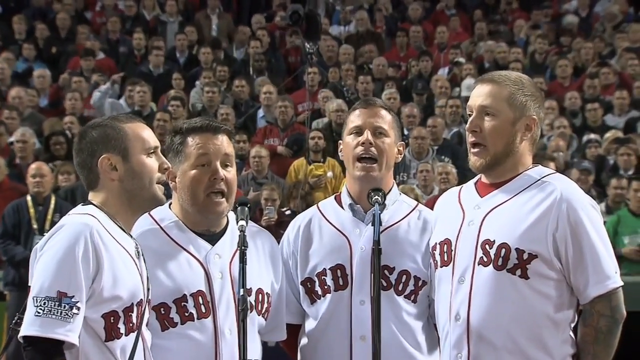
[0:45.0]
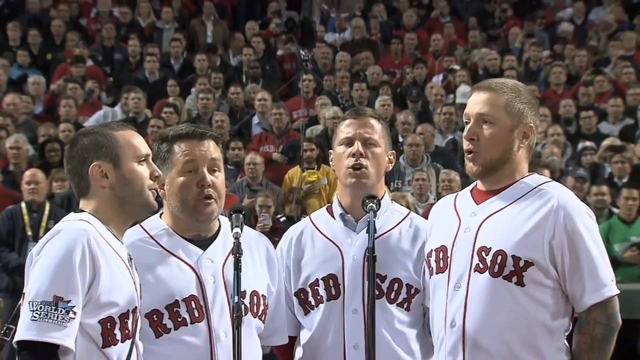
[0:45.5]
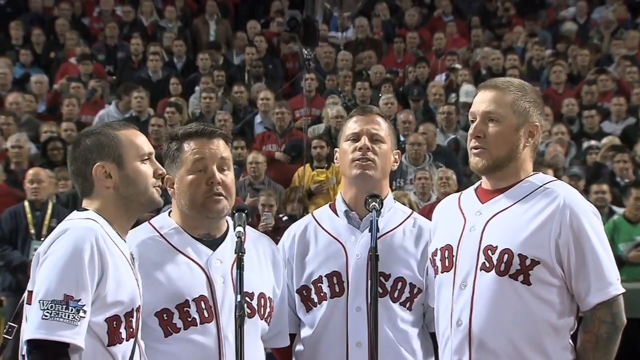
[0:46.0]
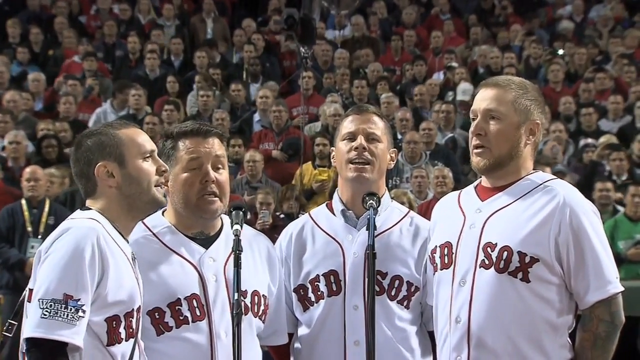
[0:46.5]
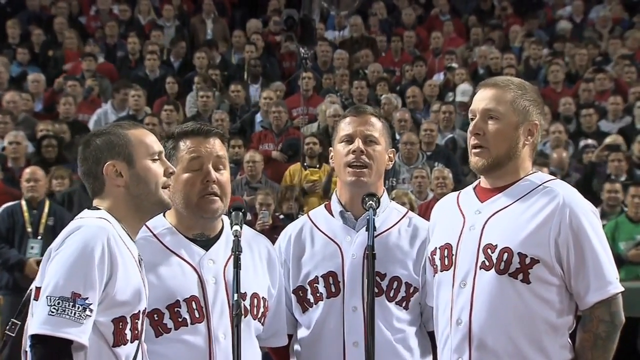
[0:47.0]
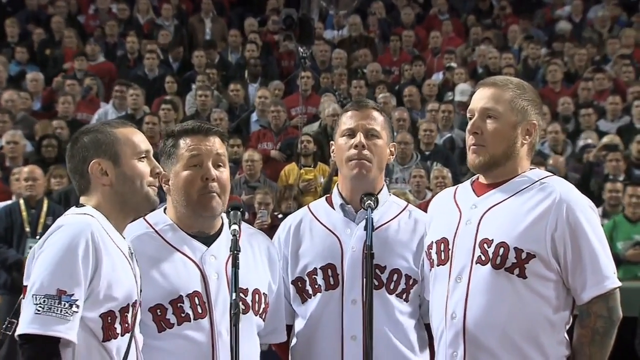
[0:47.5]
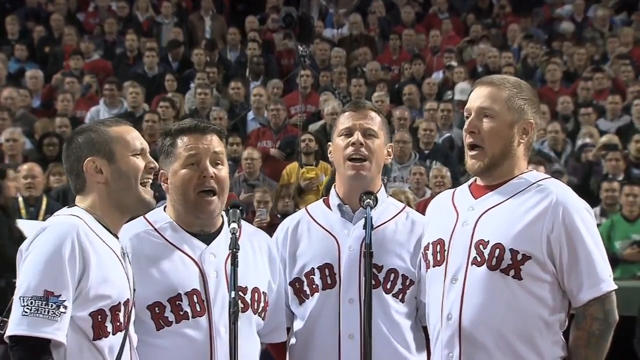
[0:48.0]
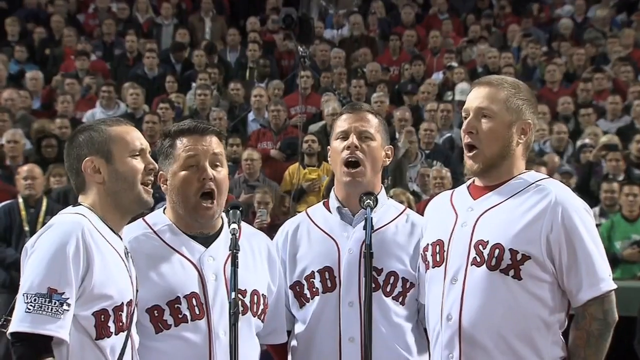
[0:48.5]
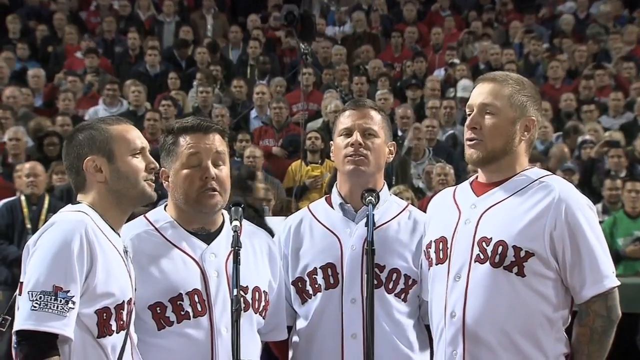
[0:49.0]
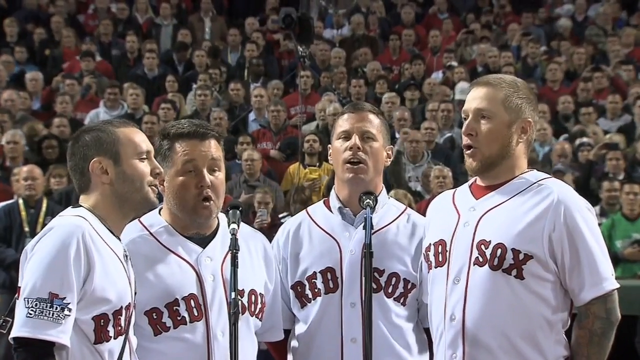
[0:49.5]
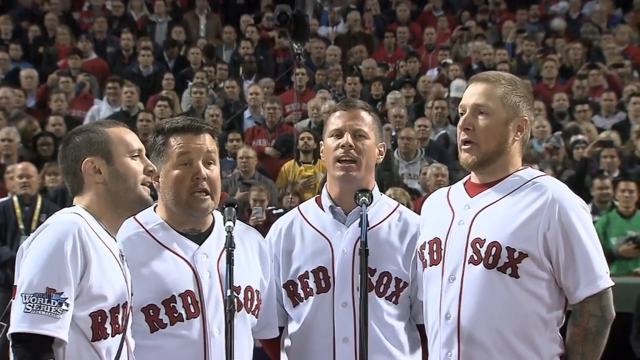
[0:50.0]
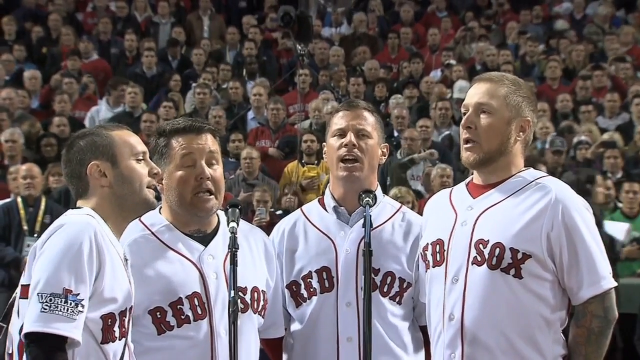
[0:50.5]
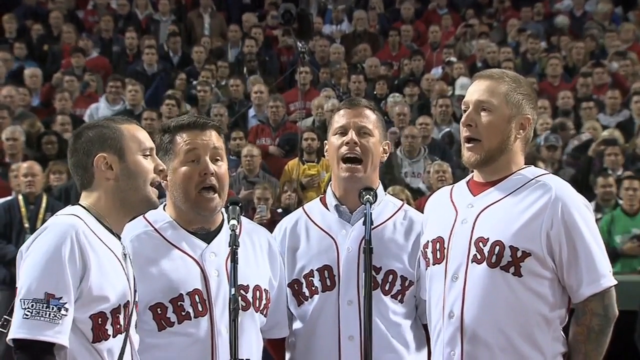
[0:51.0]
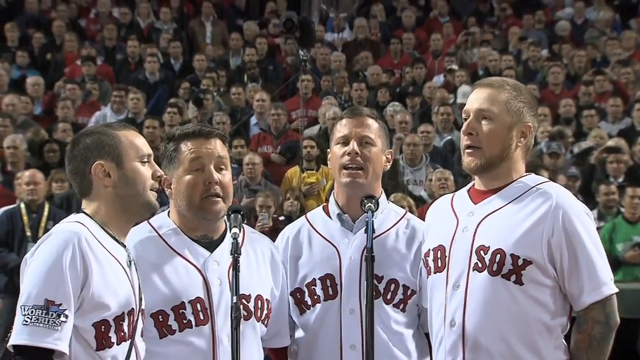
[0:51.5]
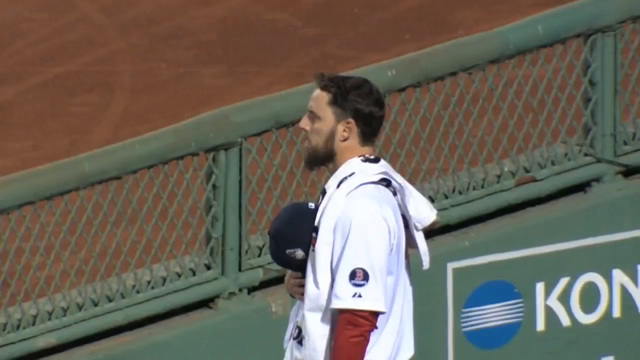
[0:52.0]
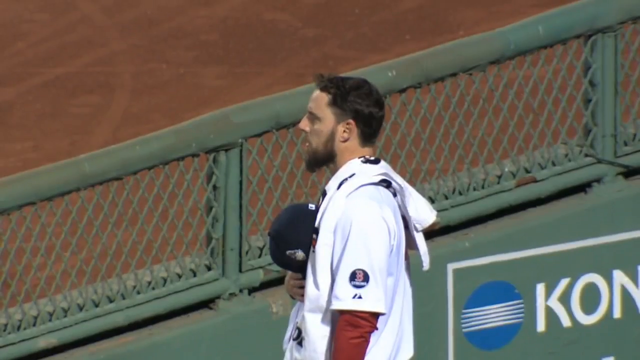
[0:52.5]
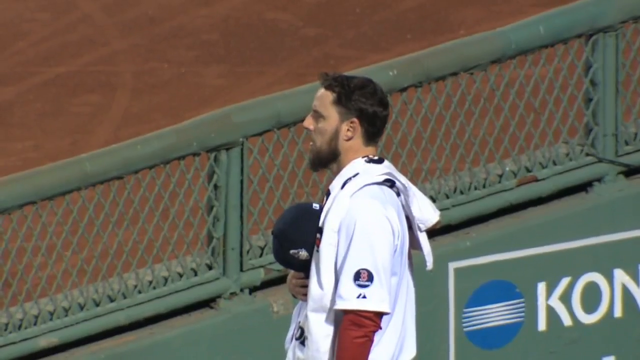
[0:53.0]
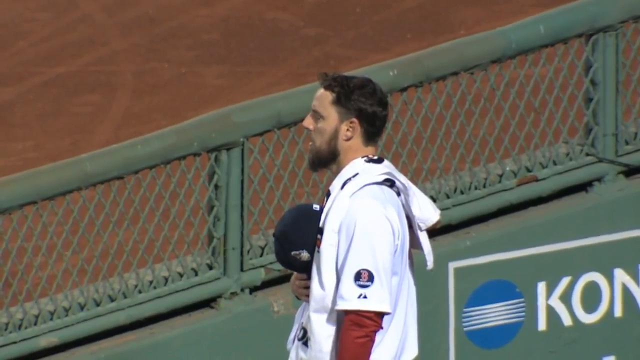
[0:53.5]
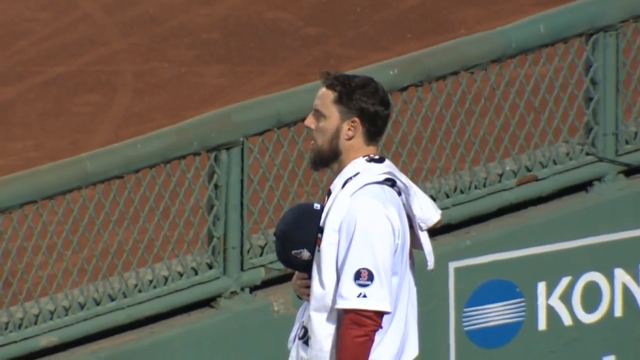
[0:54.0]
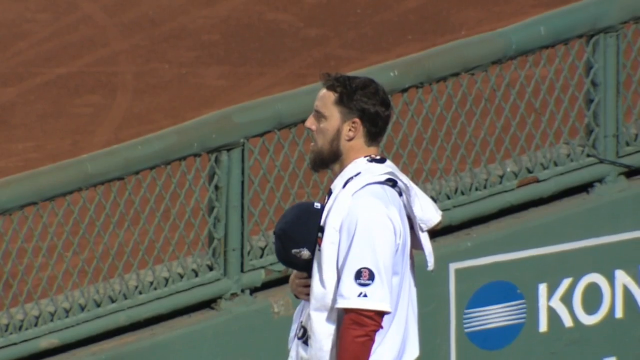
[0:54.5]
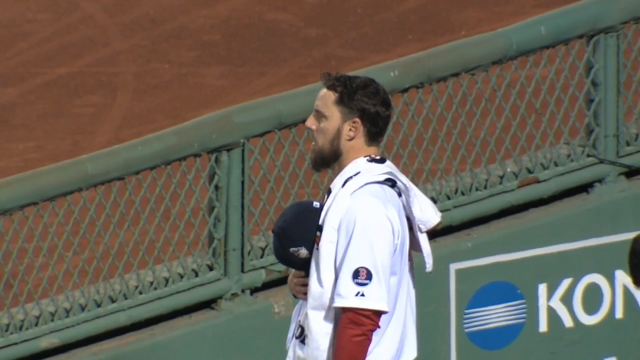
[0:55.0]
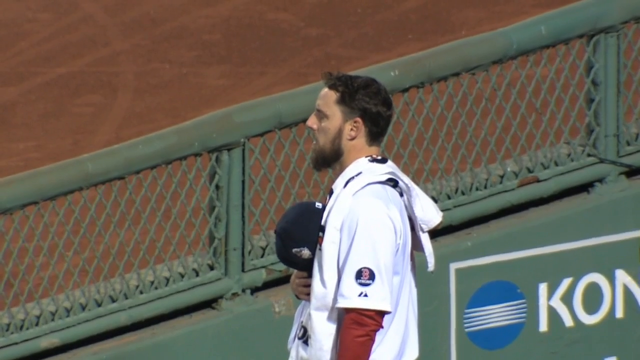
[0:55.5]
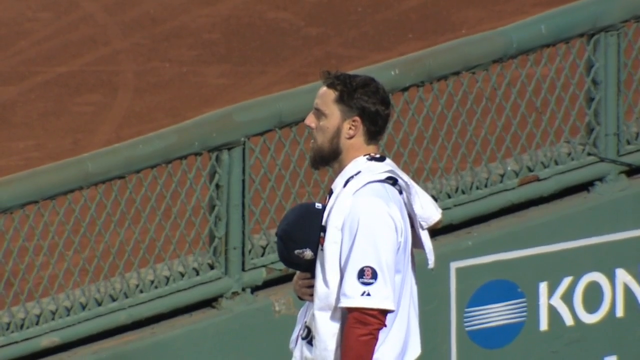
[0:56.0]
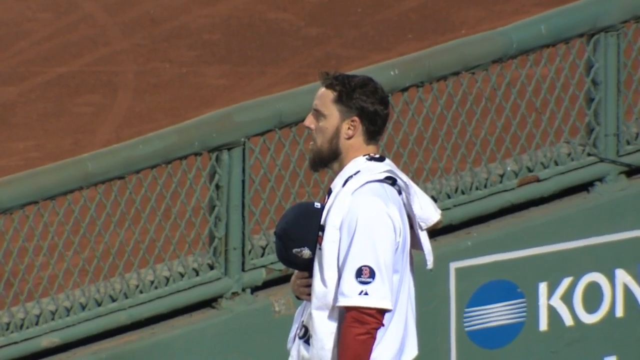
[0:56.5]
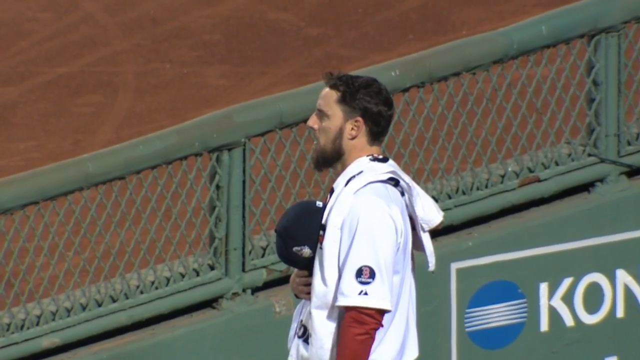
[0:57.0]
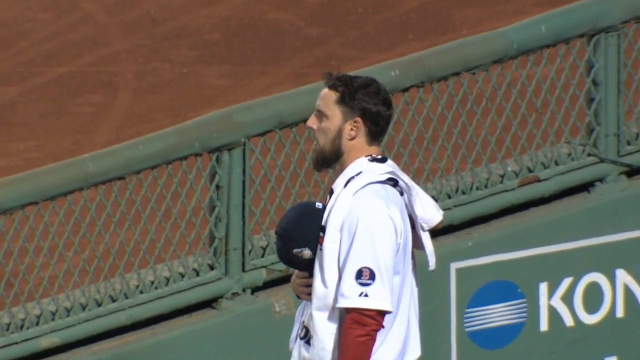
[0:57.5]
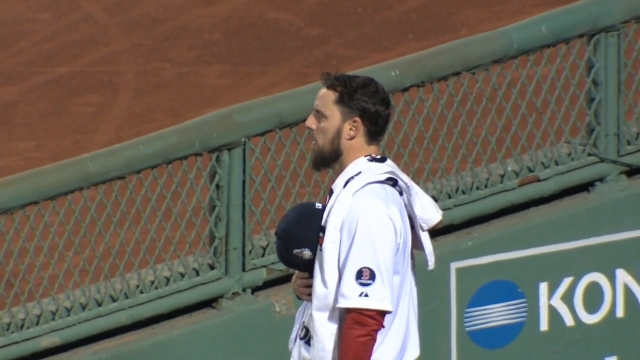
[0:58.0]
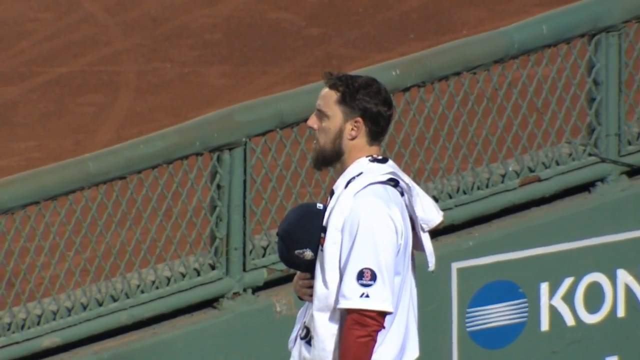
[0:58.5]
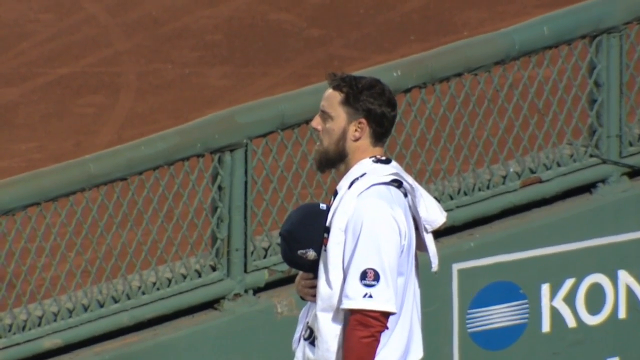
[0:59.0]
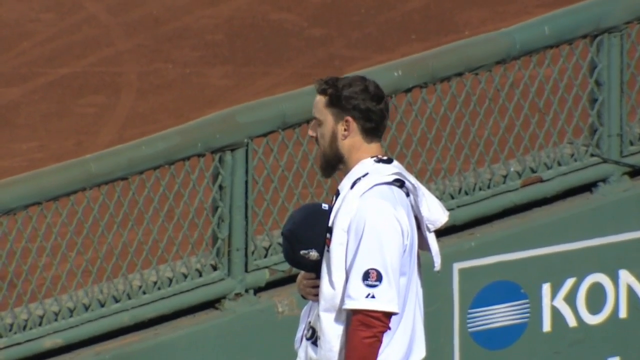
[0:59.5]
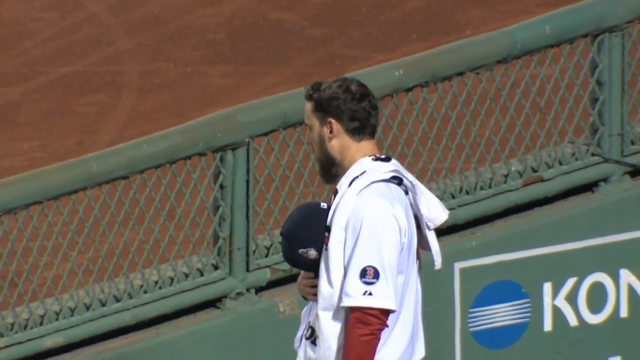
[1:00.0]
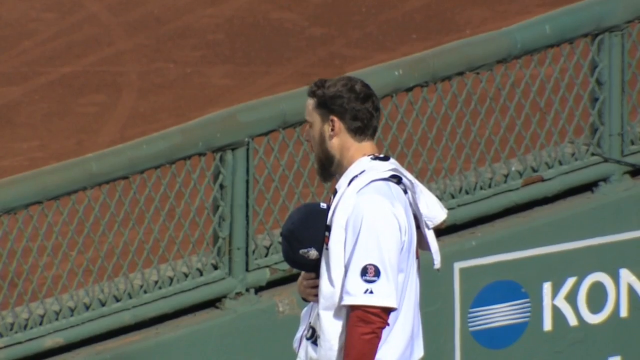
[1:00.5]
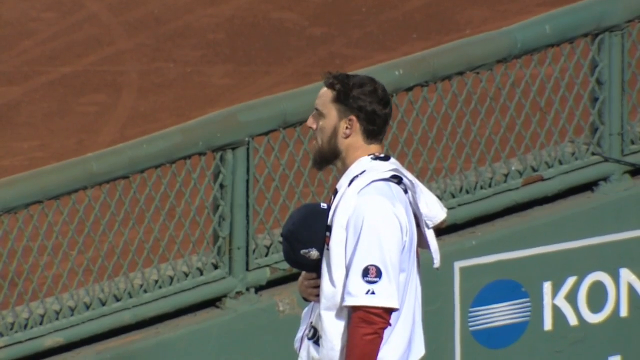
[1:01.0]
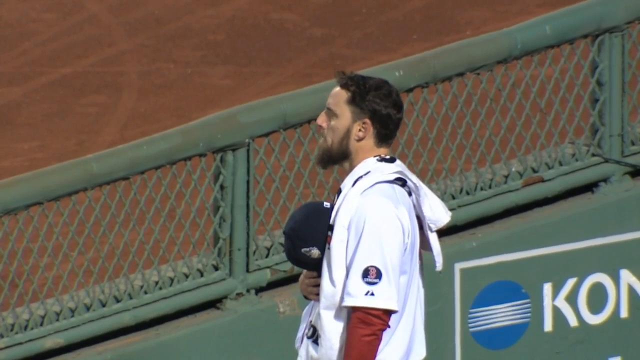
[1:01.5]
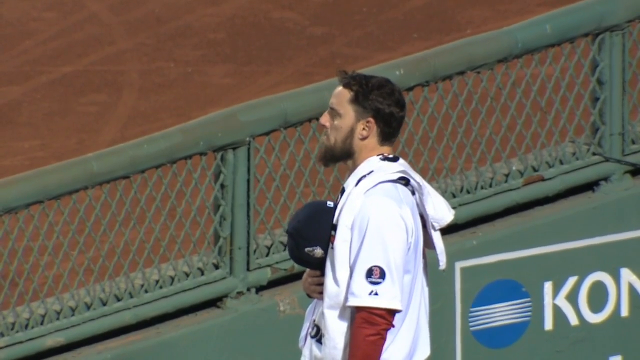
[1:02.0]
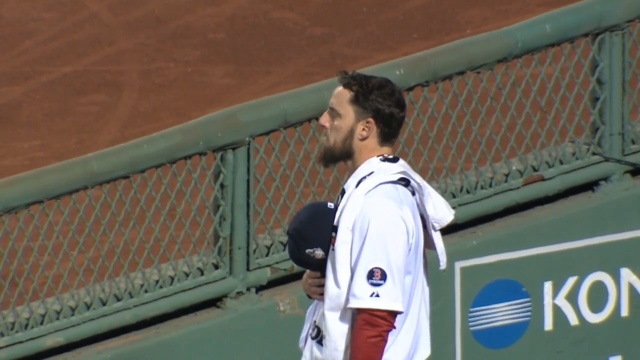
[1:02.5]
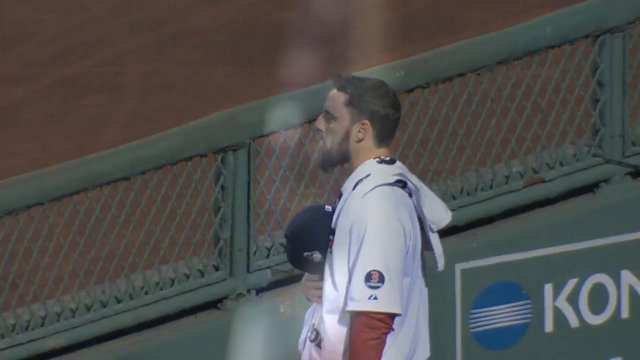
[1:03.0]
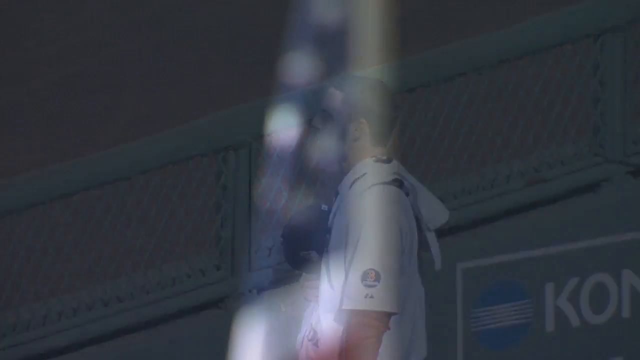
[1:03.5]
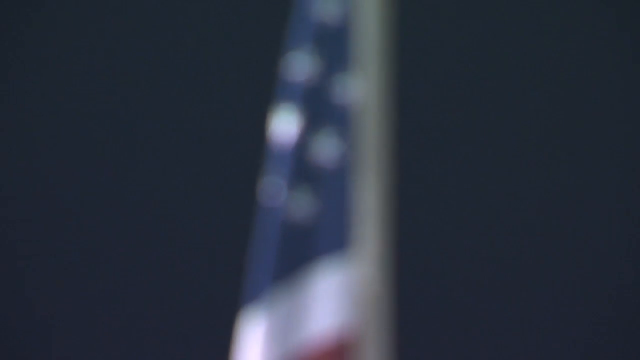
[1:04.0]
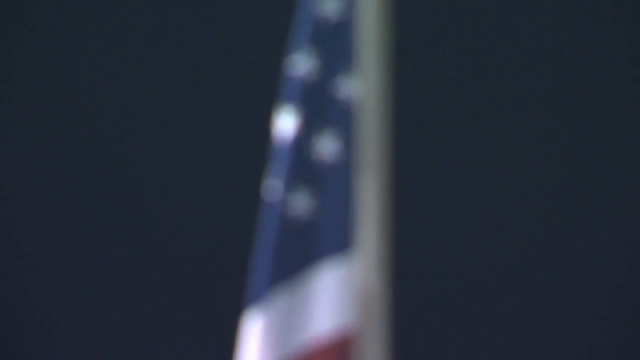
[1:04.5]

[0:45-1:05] The four men continue singing the national anthem. The camera then pans to a lone man, apparently a player since he wears a jersey, shown from far away without zooming in or out. He is a white man with a beard, holding his hat against his heart, with a towel over his shoulder and a red long-sleeve shirt under his jersey; he is apparently singing the anthem. A green fence is in front of him, and in front of the fence is the brown dirt of the baseball field. The last shot is a blurry picture of the American flag hanging somewhere in the stadium.